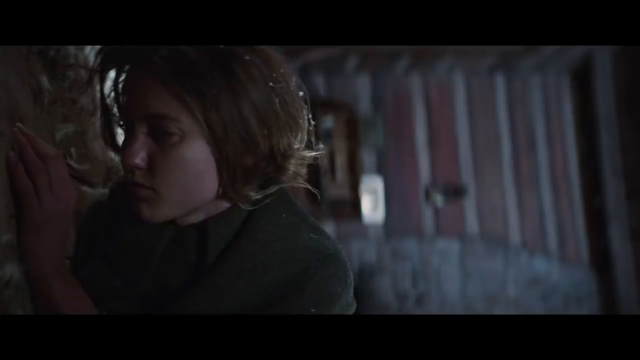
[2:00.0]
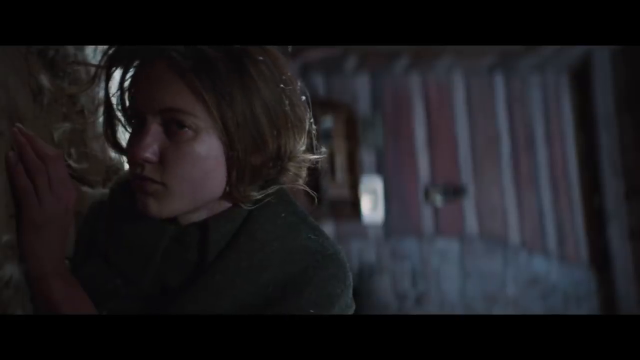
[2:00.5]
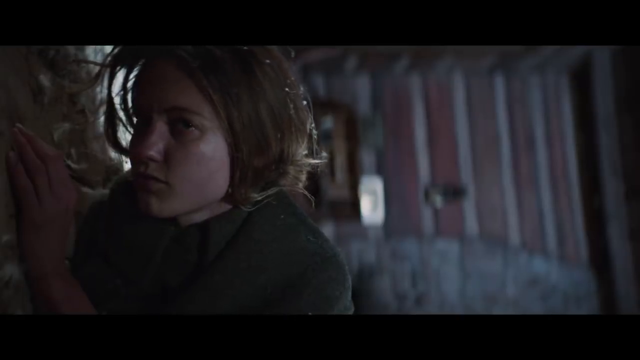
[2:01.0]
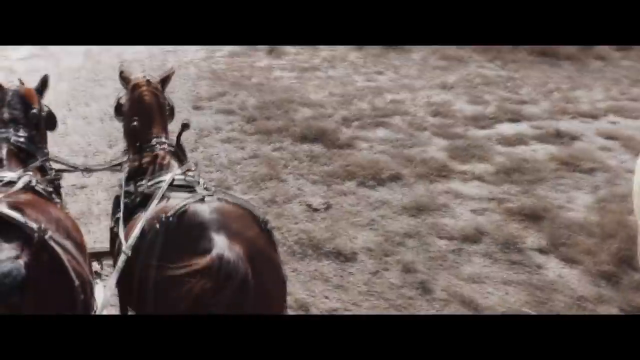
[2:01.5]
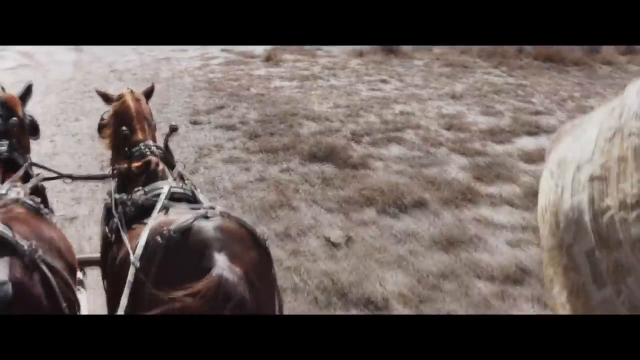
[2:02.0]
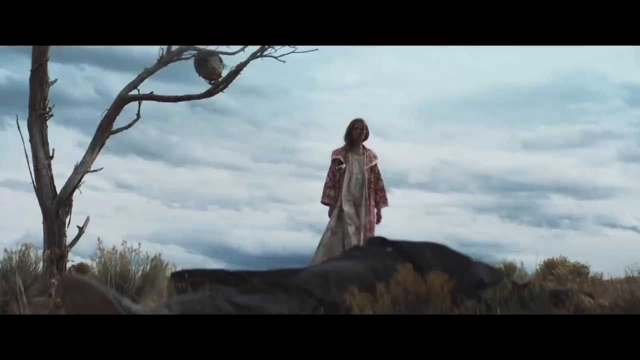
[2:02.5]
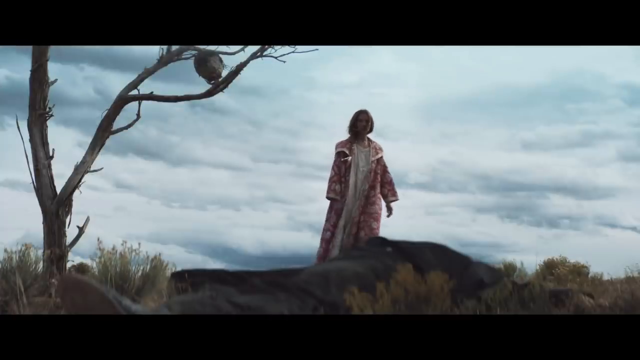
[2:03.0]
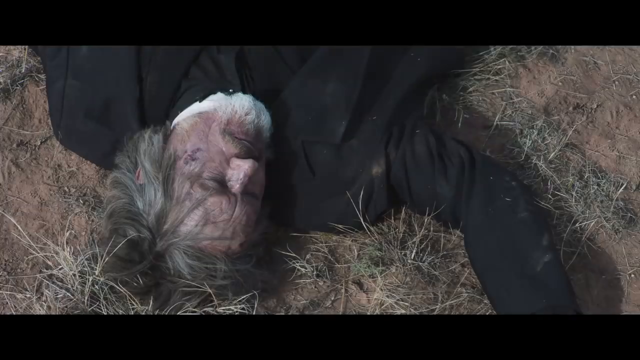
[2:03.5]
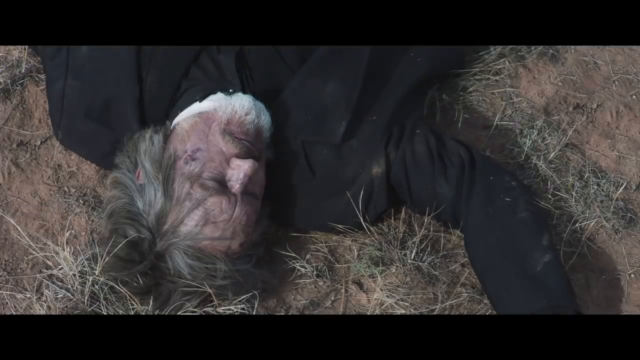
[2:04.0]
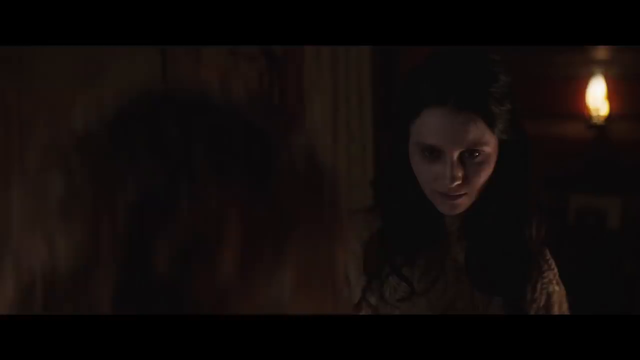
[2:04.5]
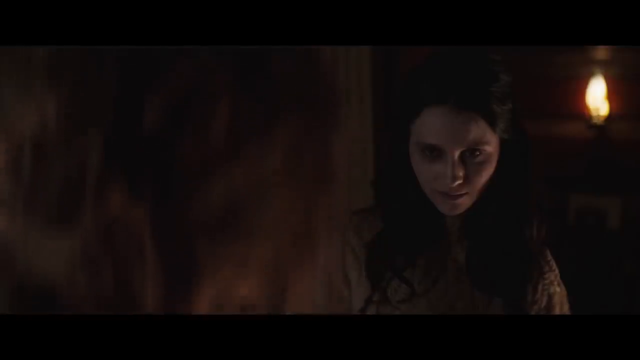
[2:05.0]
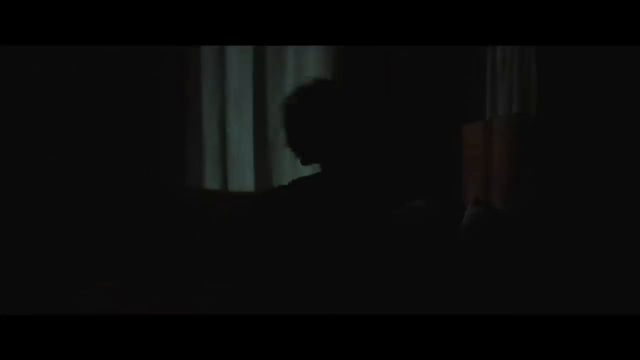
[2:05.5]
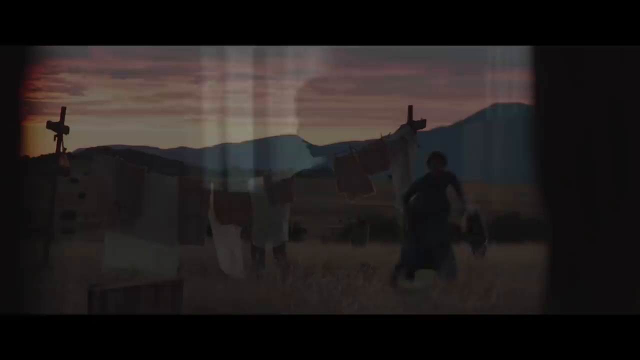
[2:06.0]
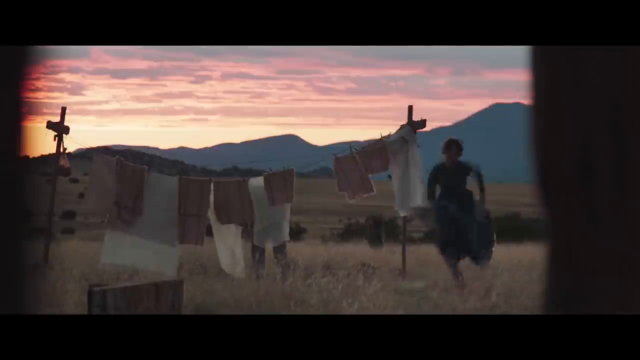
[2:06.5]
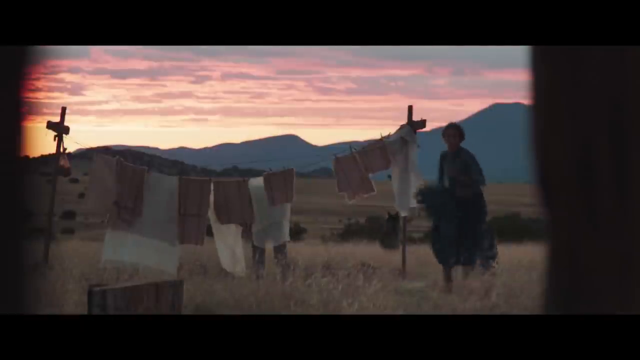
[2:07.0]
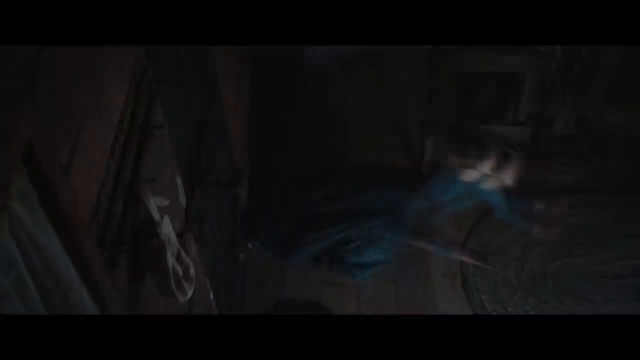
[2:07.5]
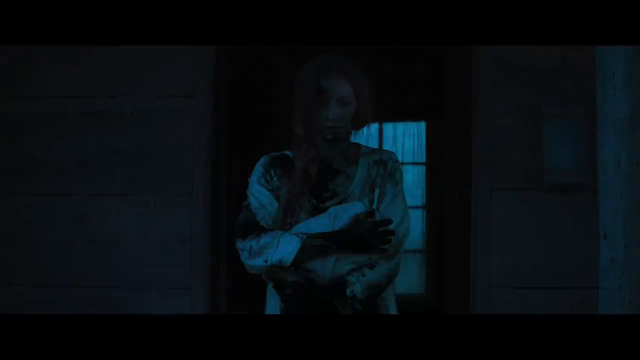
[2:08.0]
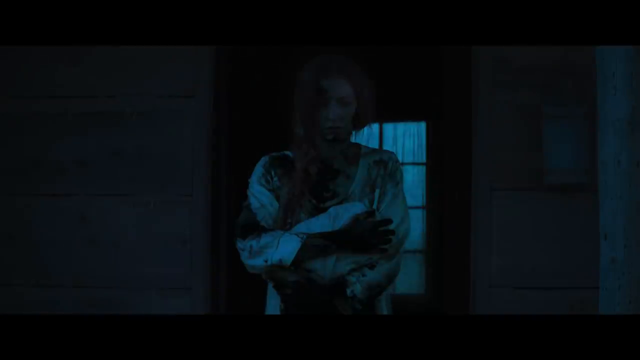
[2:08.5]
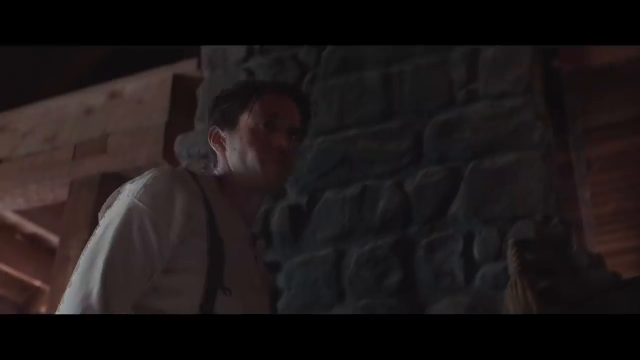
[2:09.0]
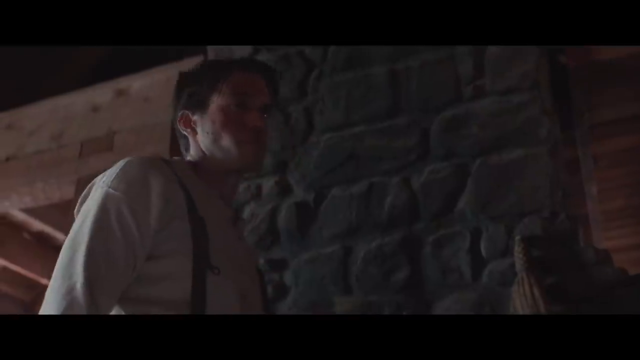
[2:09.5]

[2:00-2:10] The woman with the brown hair looks a lot more tired, with stuff in her hair. Someone rides a wagon with two horses in front. The shot cuts to the woman wearing a red and pink robe, standing on some rocks near a very dead-looking small tree, against a grayish-blue background with lots of clouds. She sees the body of the preacher man, the man who wore black; his face looks dried out and mangled, as if something really bad happened to him. Someone wakes up, and someone hangs laundry on a line outside at sunset. They run inside, and the lady in blue has her head against the door, apparently listening for something, and she gets knocked back. Someone stands holding a bloody-looking towel or maybe clothing. A man, possibly the husband, stands in front of a stone fireplace; he looks like he has been in a tussle, with scars and scrapes all over his head, and he looks at the woman.